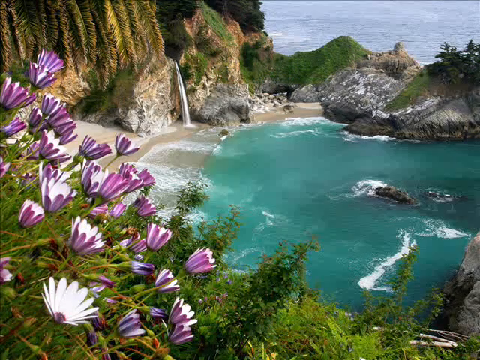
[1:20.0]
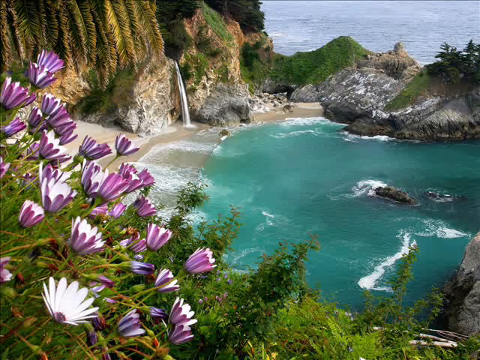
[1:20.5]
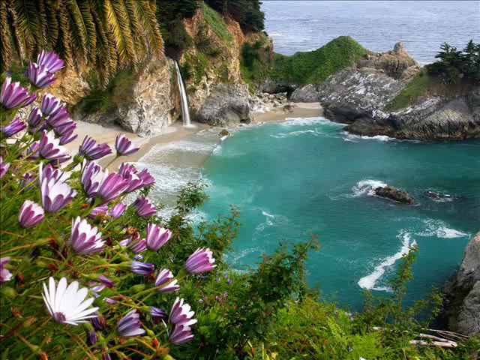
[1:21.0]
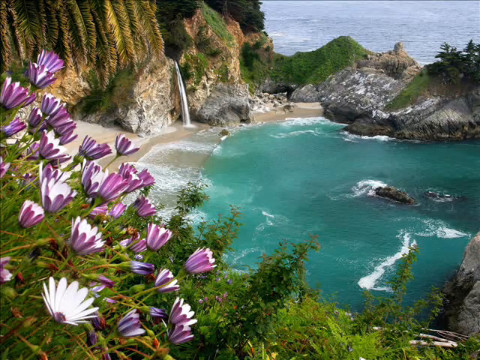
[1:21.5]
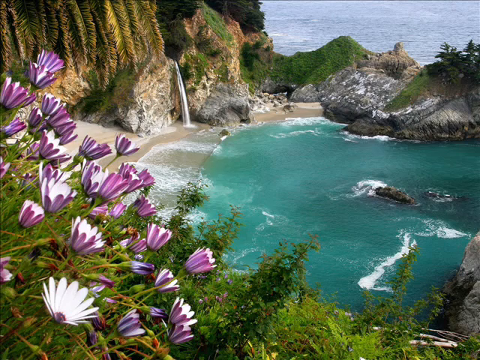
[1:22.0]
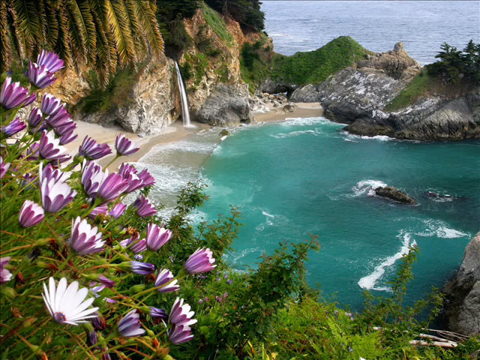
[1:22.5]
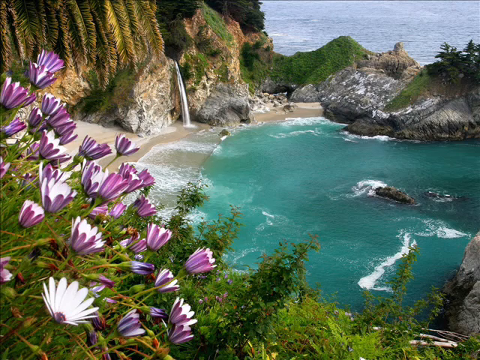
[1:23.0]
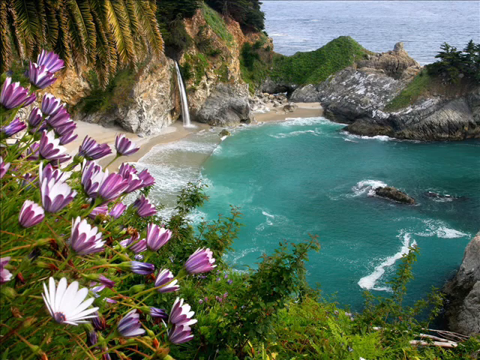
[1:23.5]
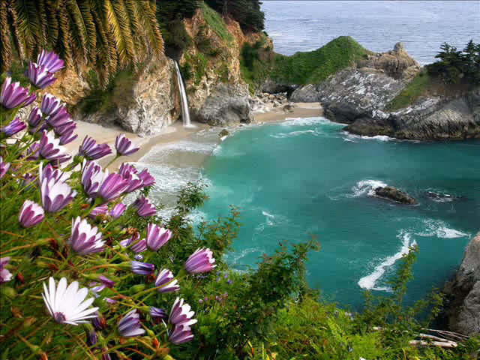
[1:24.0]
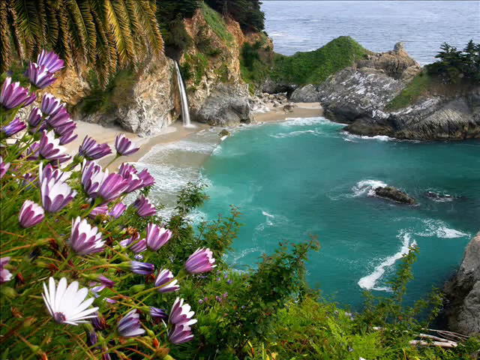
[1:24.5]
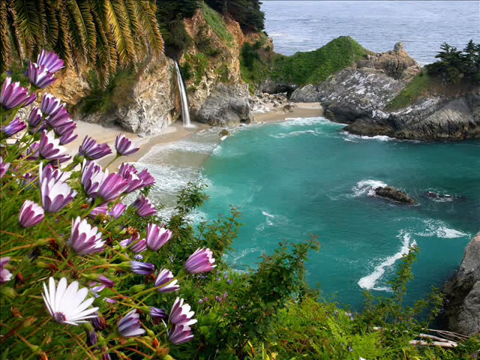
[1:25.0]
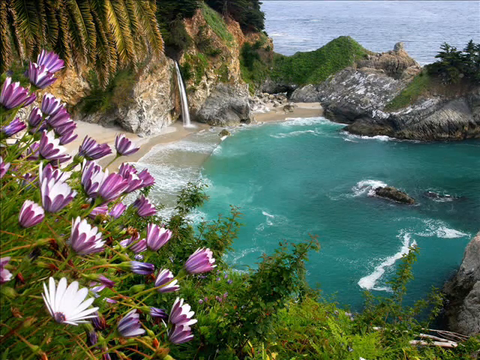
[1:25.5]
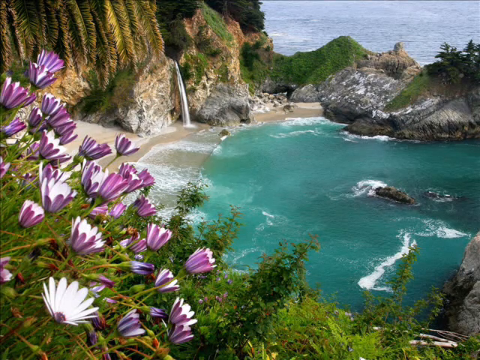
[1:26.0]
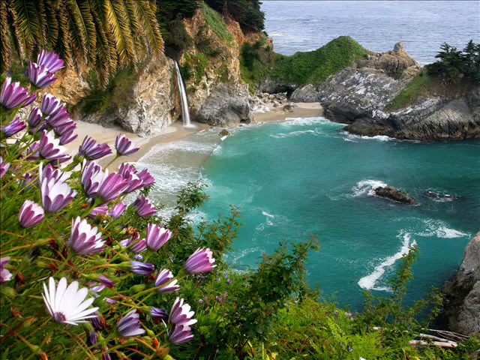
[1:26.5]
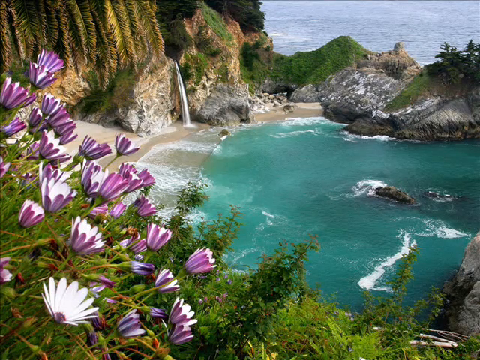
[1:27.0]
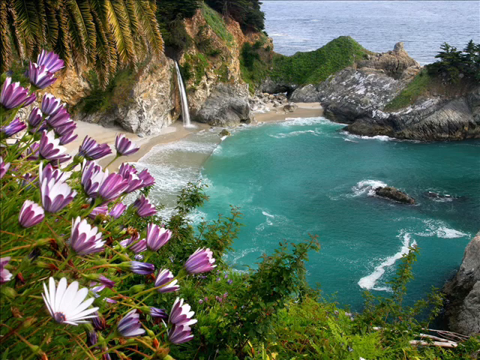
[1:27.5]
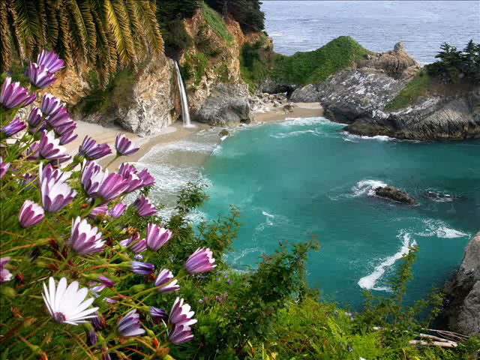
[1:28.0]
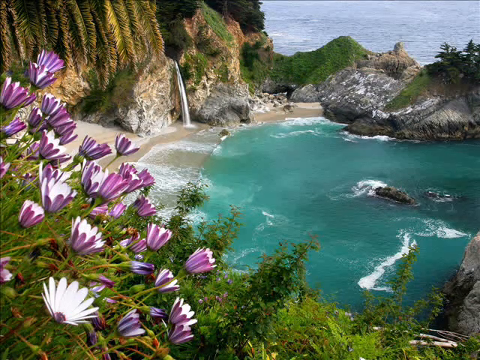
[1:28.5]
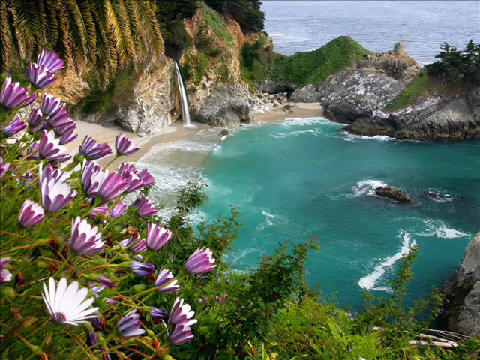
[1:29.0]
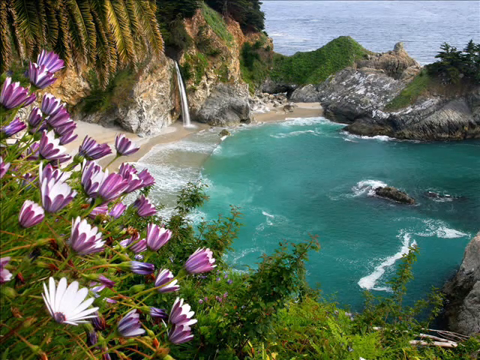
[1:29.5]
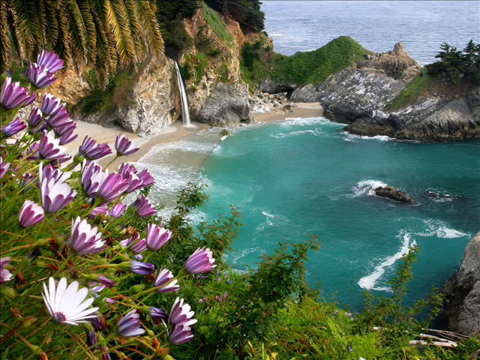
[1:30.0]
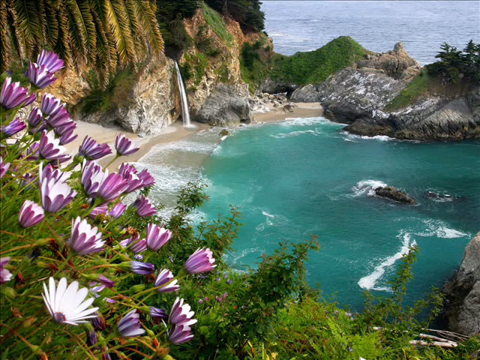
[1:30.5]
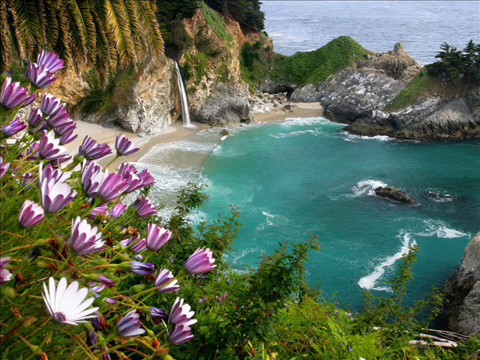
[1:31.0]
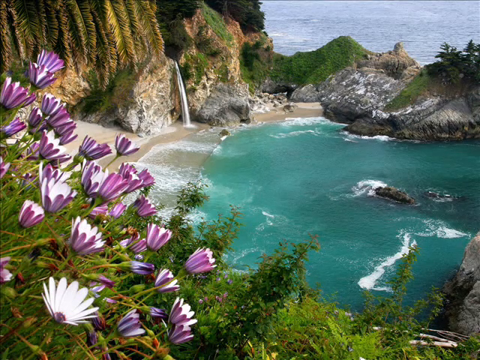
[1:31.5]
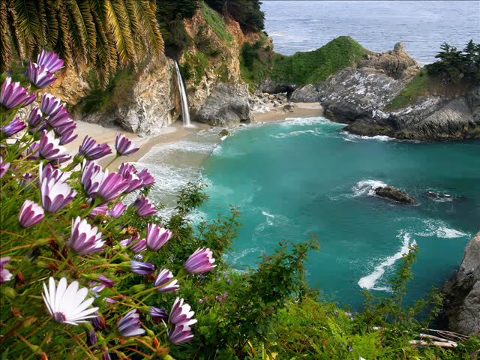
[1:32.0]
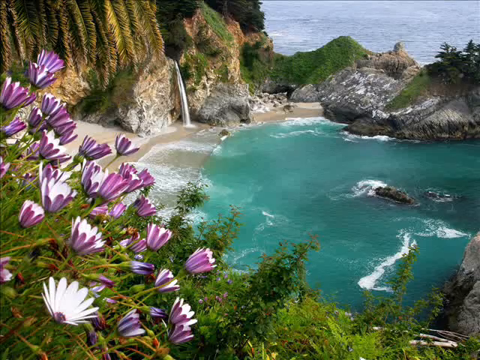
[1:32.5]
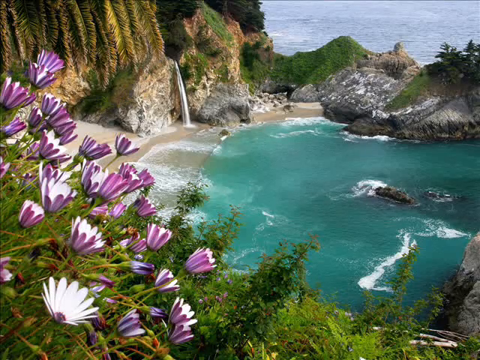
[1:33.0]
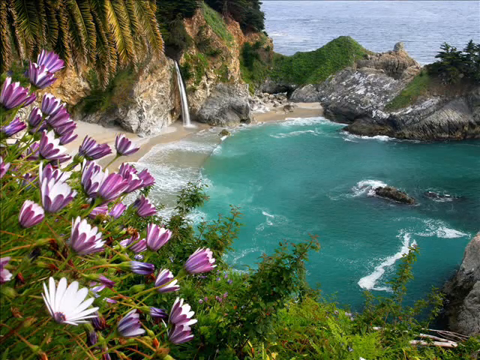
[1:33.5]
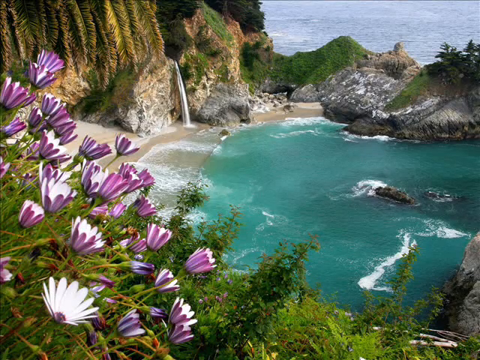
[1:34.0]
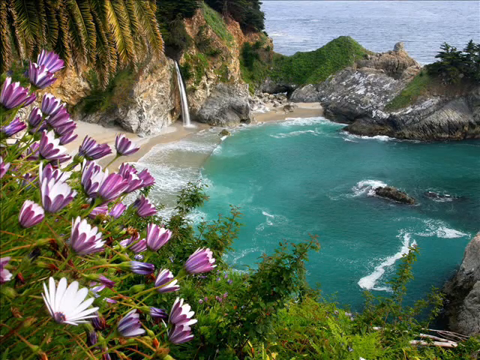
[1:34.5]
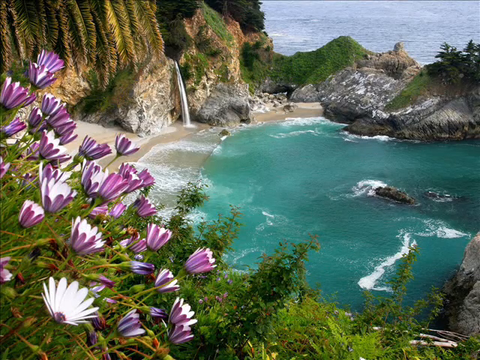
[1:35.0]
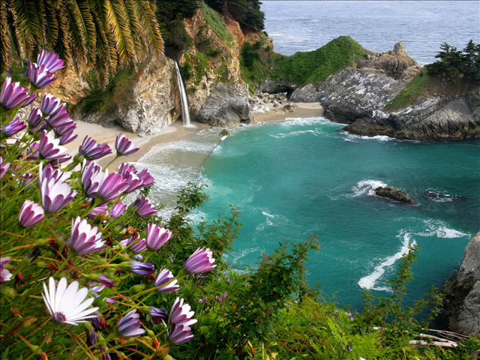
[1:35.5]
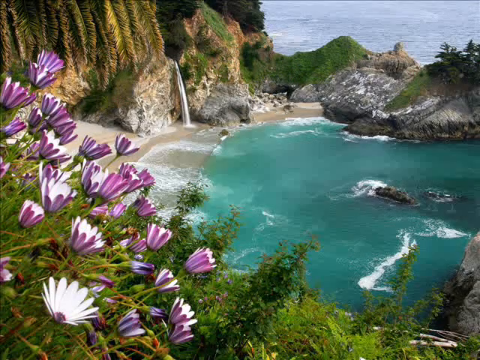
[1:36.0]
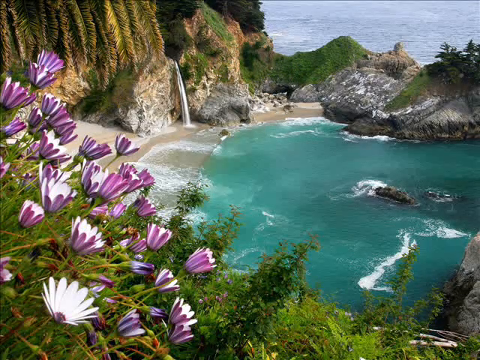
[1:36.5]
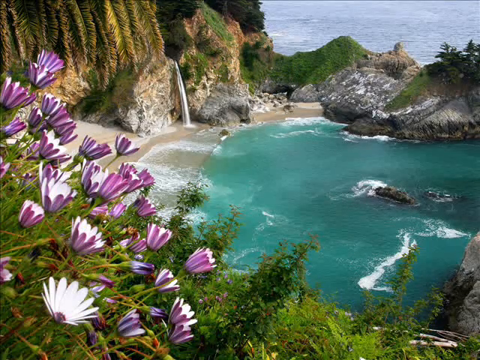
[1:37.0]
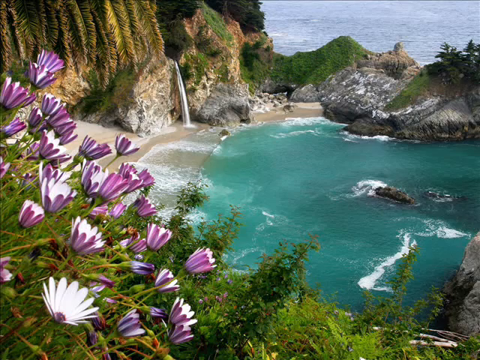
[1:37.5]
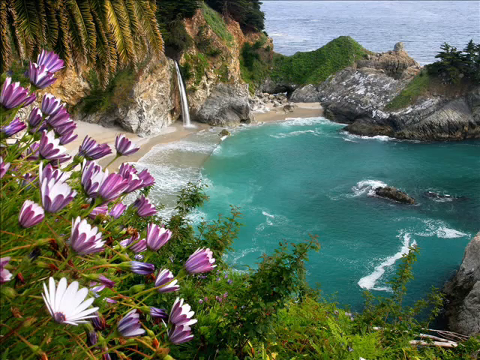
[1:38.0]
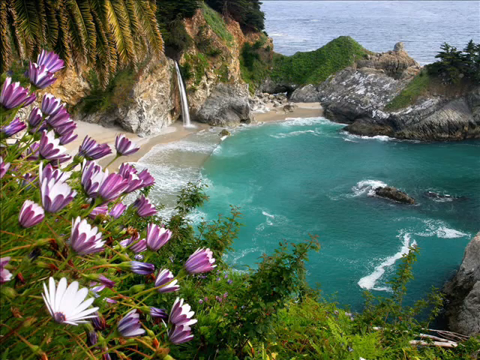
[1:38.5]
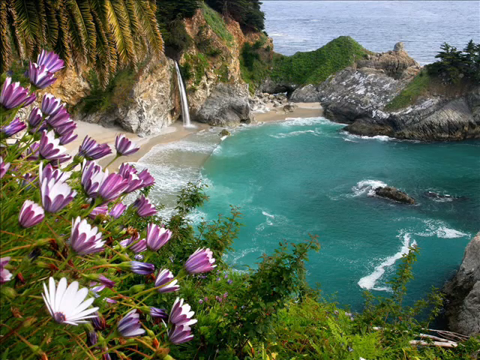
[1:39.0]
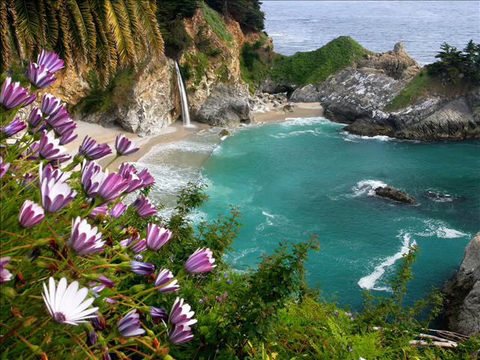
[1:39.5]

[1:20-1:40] The image is still. The areas around the rocks on the right side are rather dark, perhaps shaded by another rock structure out of view to the right. To the left of the hump of the brown rock, a bit of foam is forming around it. Further up are the hills. The first hill looks sort of like a turtle head coming out of its shell, with the shell deeply grooved in on top, as if its front part had been scooped out with an ice cream scoop. On top, roughly where the missing shell section would be, there looks to be a slide on the turtle's neck with white rock on it, perhaps a bit of snow or white rock, maybe limestone. Further up are green grass and green trees, rather dark, perhaps from the shadow of a larger rock structure to the right.